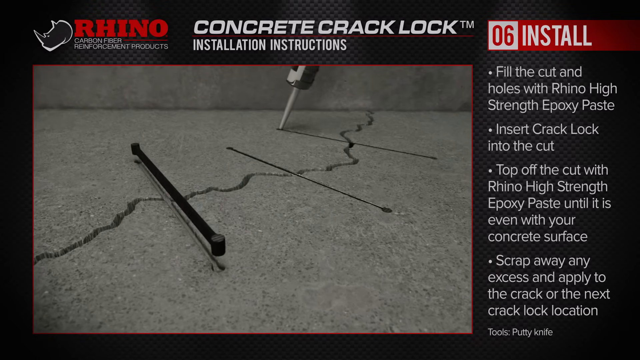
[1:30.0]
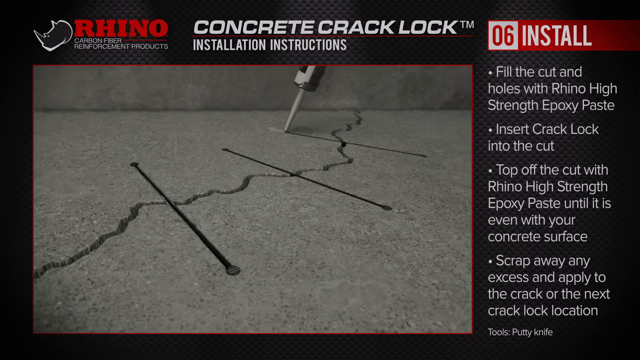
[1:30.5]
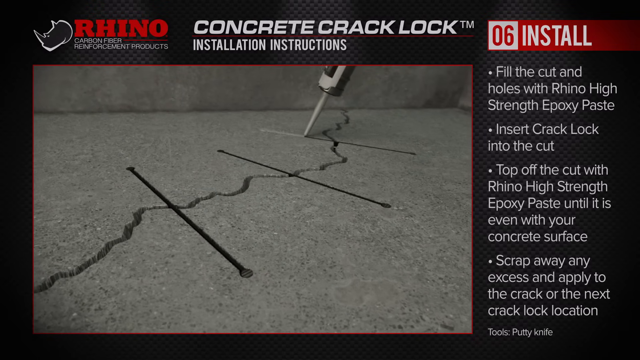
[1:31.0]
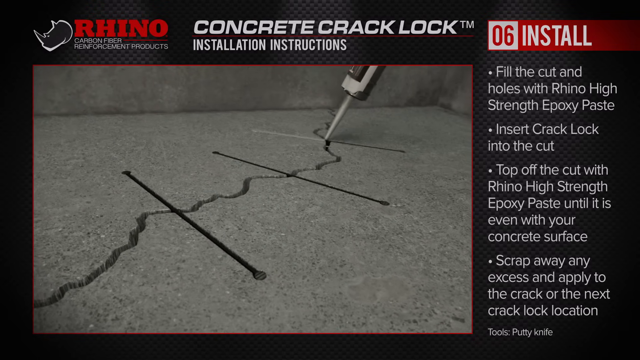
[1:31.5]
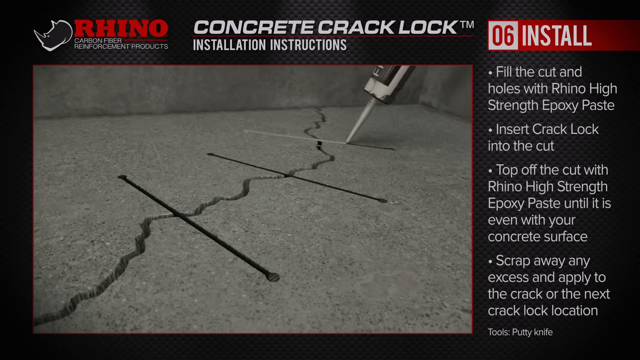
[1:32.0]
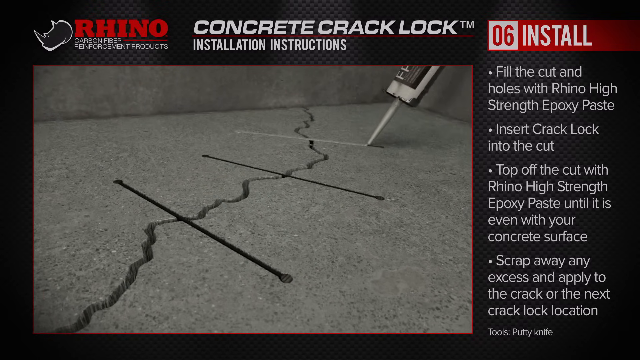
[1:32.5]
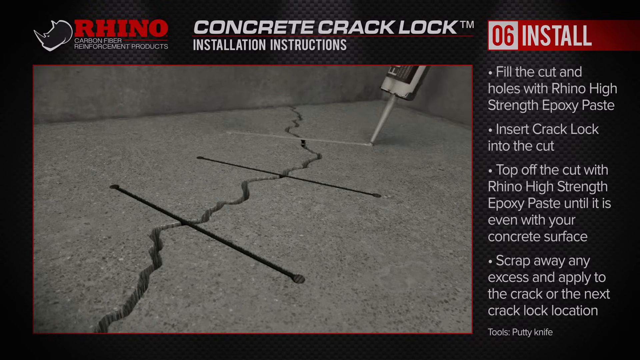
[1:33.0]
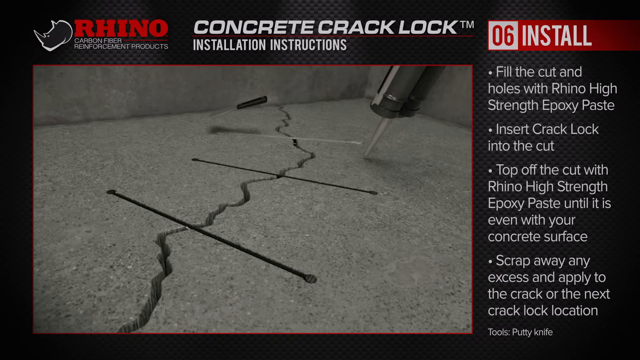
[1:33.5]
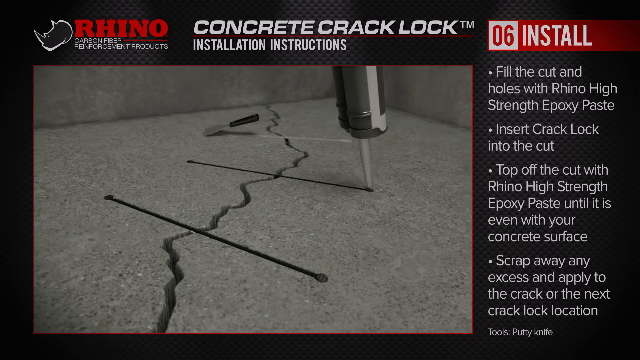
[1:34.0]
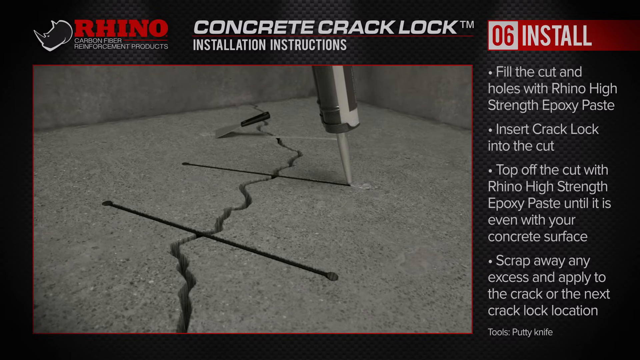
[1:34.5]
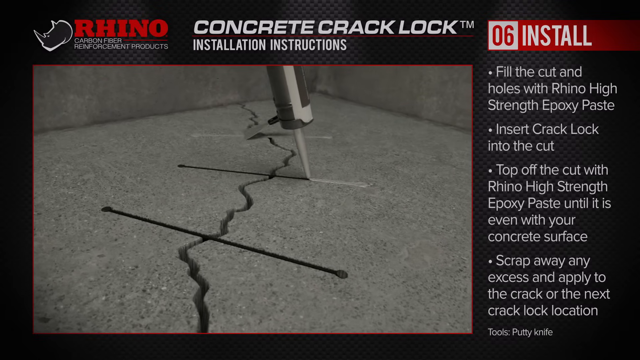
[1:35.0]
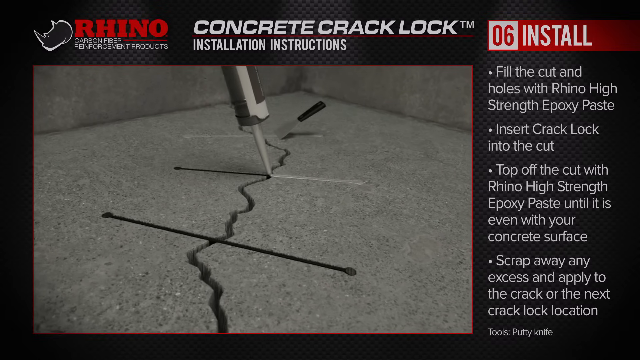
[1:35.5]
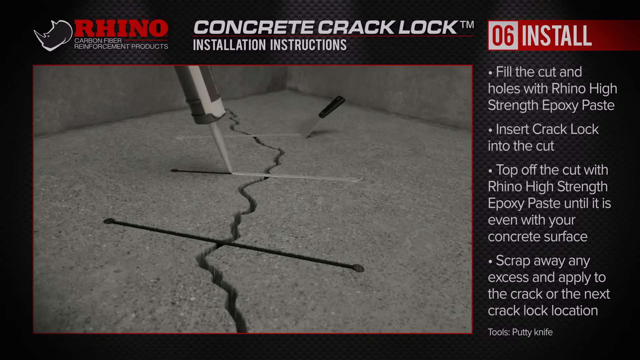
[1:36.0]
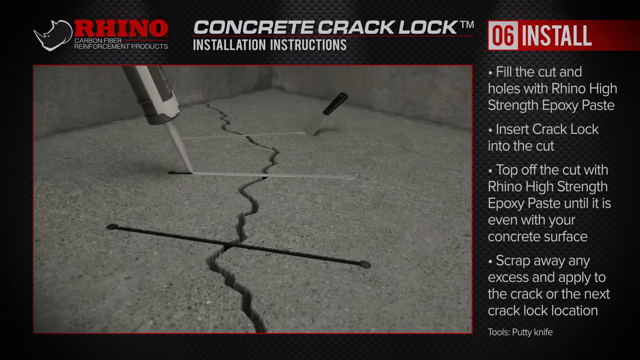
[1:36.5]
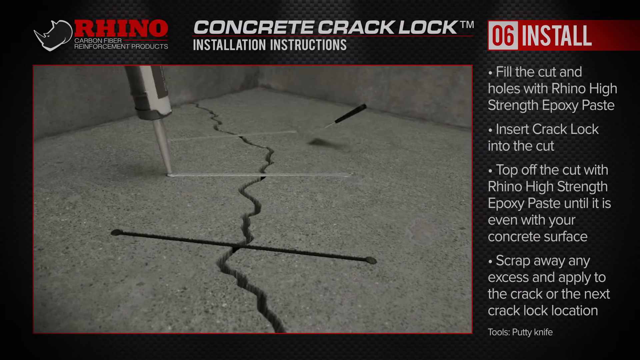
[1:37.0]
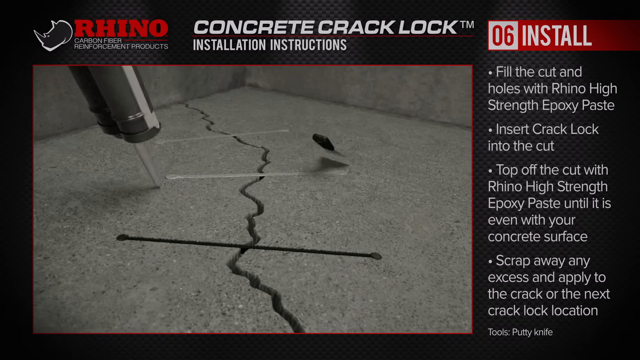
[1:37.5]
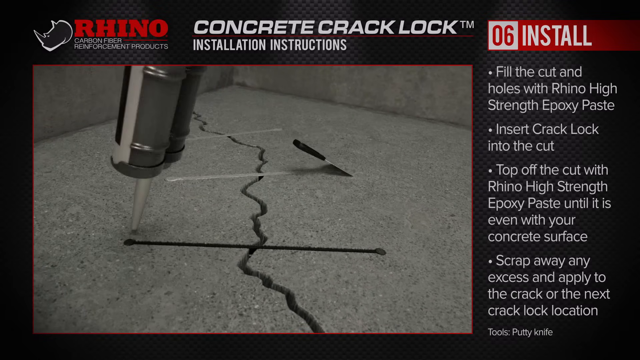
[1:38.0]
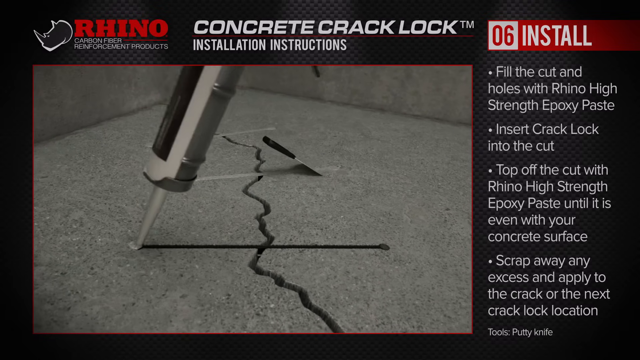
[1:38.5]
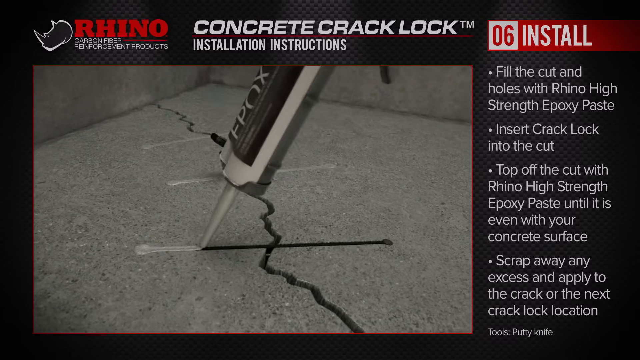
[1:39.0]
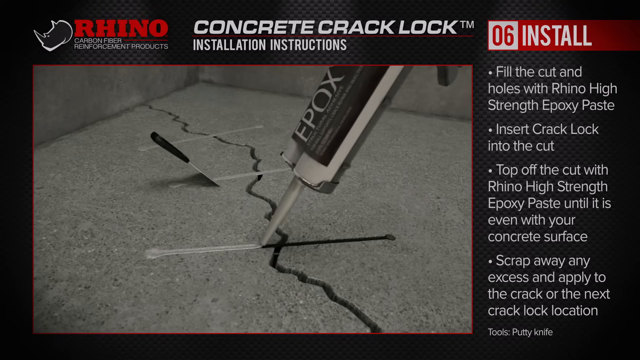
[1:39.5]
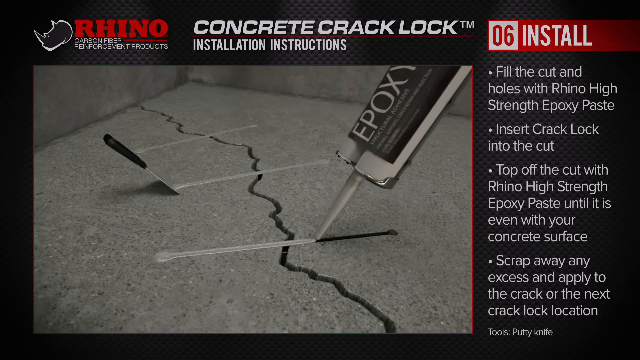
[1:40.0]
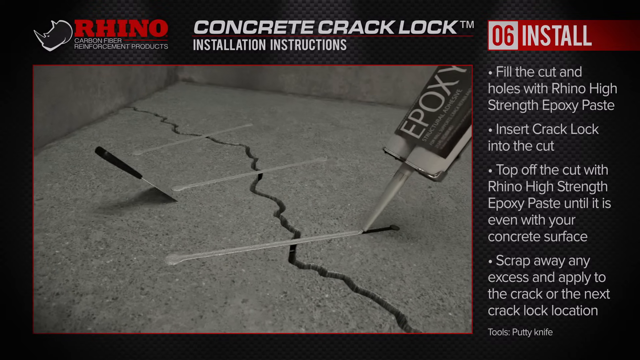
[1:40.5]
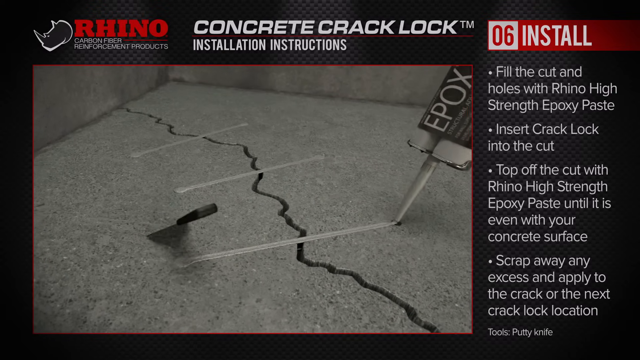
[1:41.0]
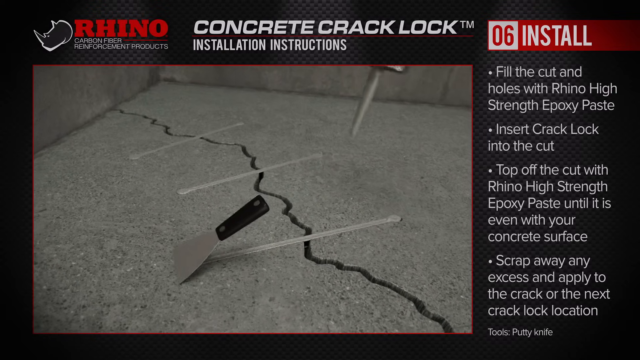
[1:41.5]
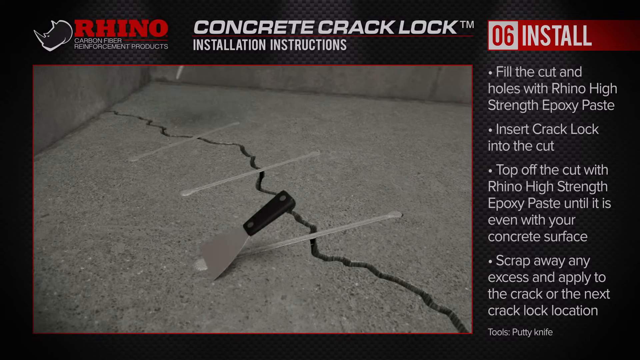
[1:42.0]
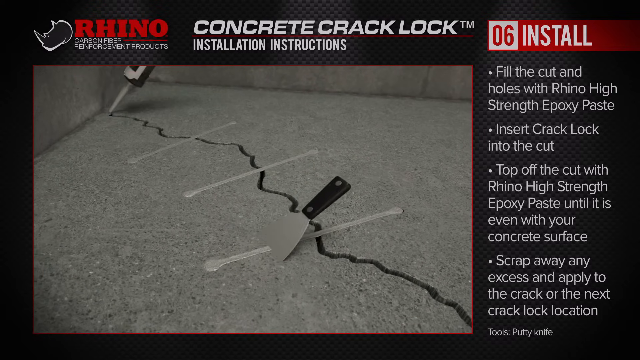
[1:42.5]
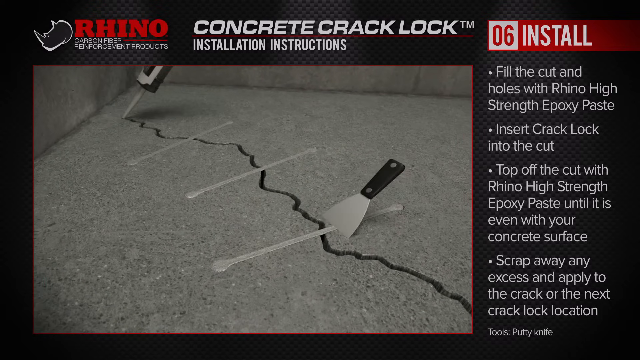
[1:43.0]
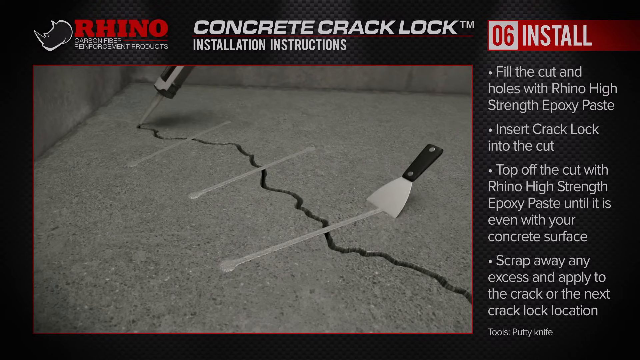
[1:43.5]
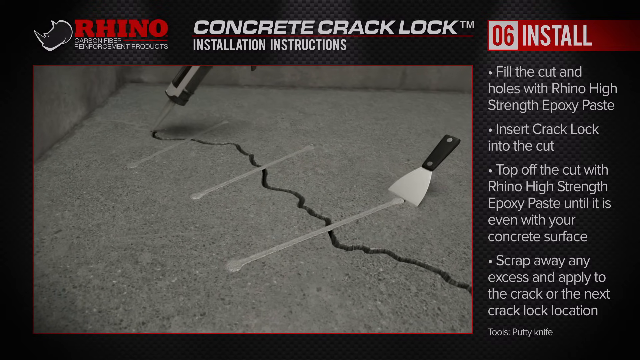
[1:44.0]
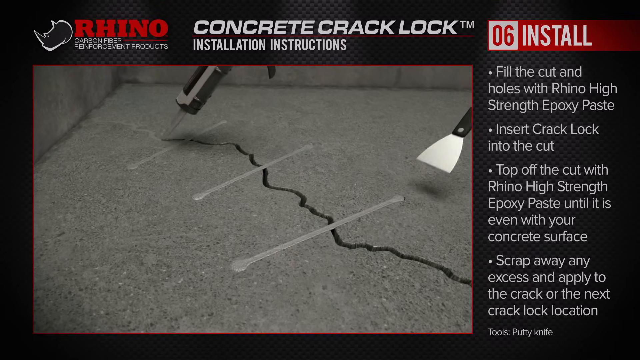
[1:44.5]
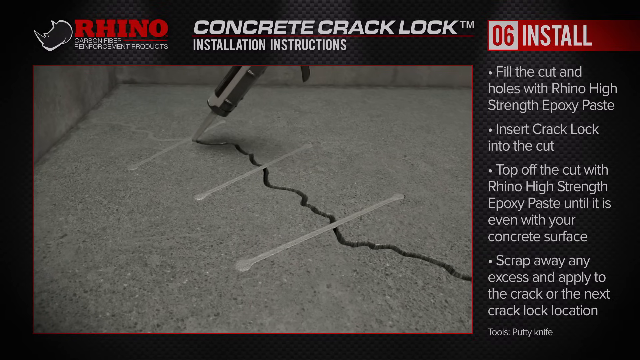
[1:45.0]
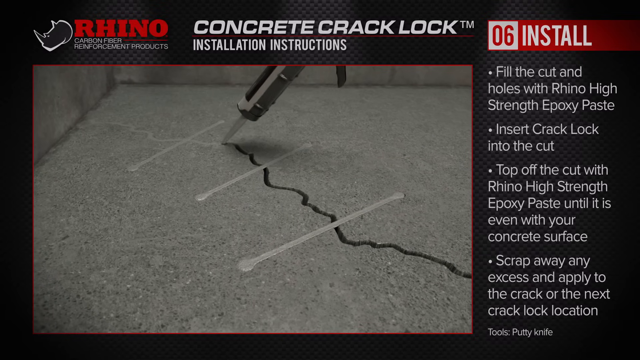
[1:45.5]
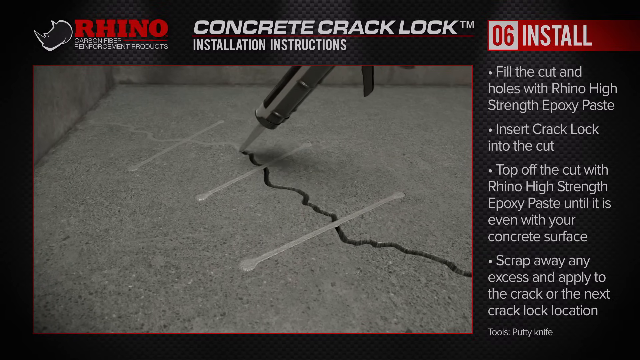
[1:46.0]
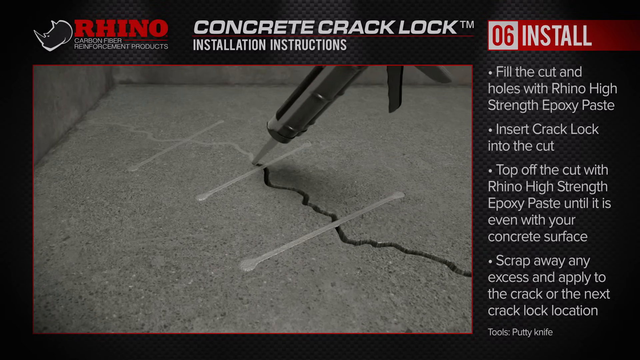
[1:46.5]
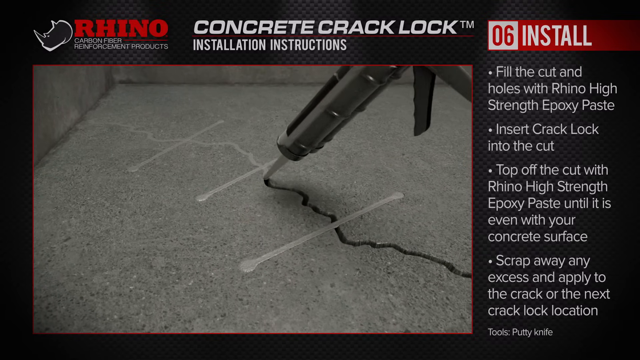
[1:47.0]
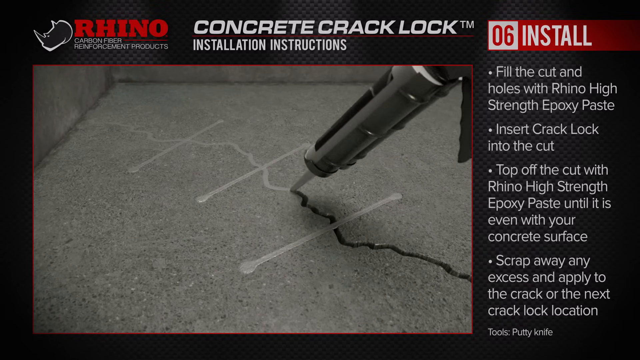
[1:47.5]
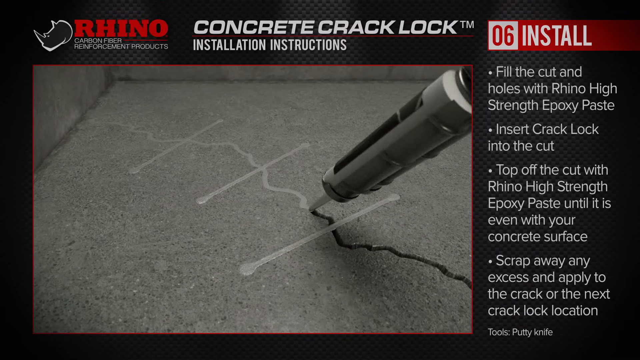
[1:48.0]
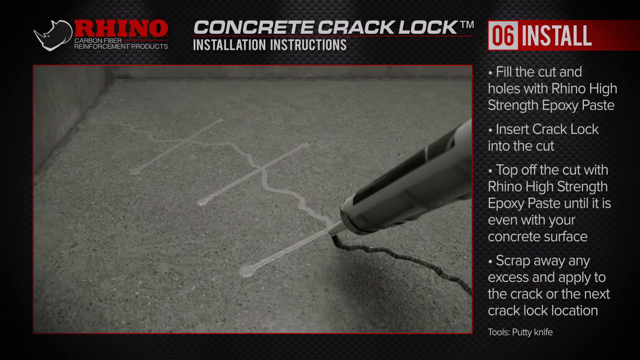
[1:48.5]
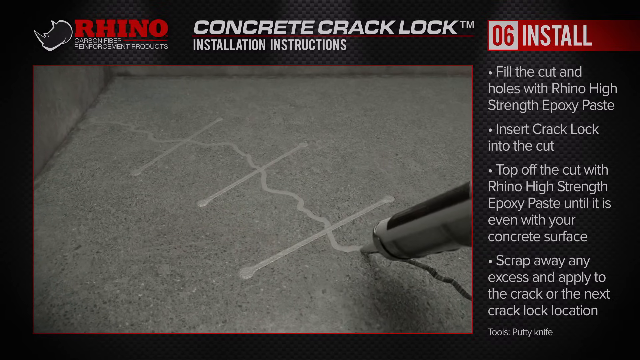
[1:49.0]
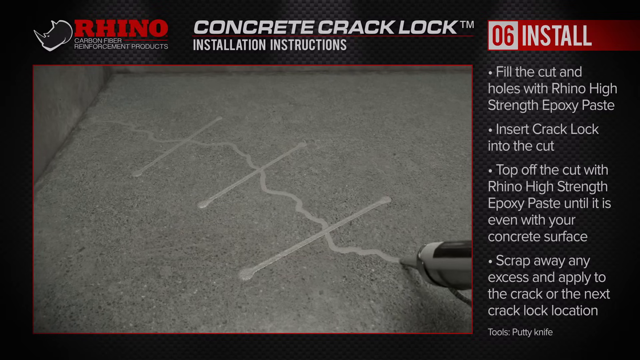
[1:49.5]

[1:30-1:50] Epoxy paste is applied to the cracked lock openings and sealed with a scalpel. This is step number six, install, and the instructions state to fill the cuts and holes with Rhino High Strength Epoxy Paste, insert the cracked lock into the cuts, and top off the cuts with Rhino High Strength Epoxy Paste until it is even with the concrete surface, then scrape away any excess and apply to the next crack location. This is demonstrated as the epoxy paste is applied to the cracked lock and scraped away in a very methodical process. Once the cracked lock has been sealed with epoxy, the cracked line is sealed by the epoxy as well. The ground floor is gray. The epoxy paste is black alongside silver, with a white tip. Once sealed, the silver-like color covers the cracks.